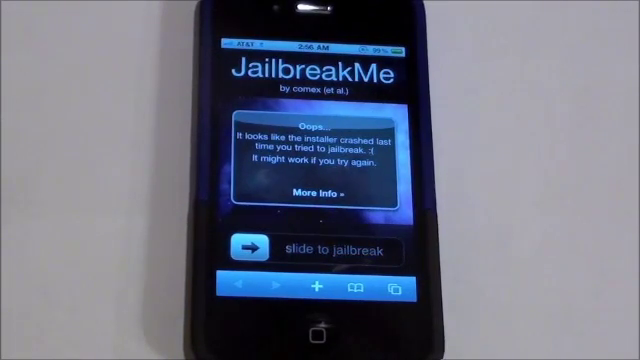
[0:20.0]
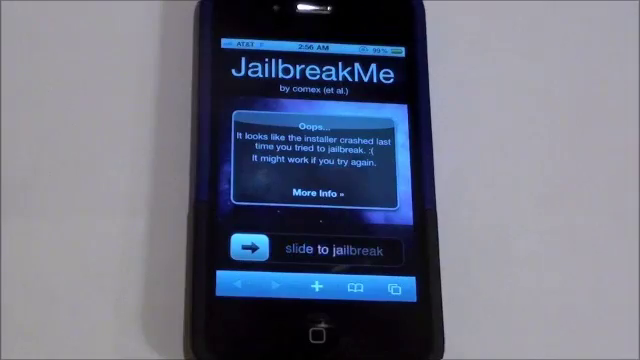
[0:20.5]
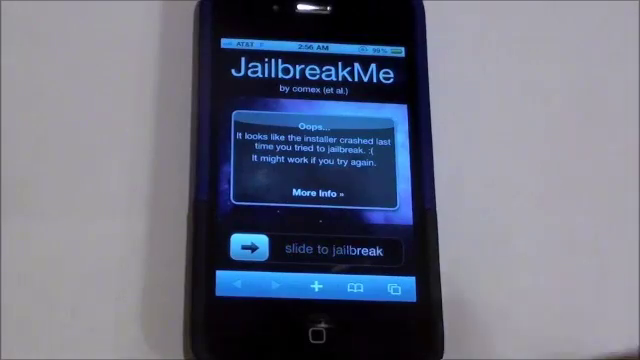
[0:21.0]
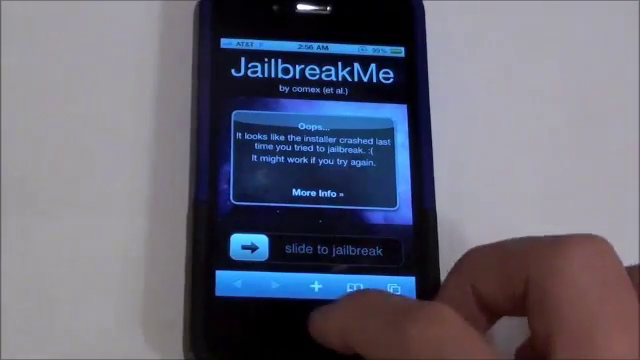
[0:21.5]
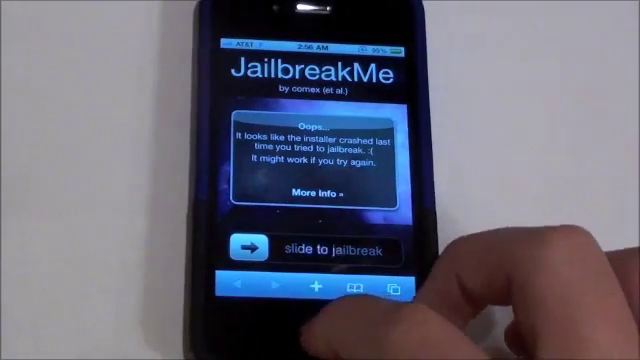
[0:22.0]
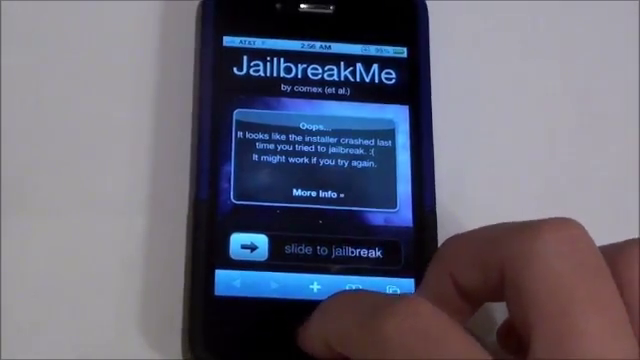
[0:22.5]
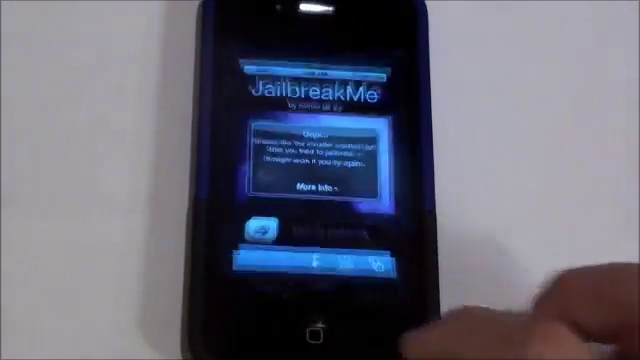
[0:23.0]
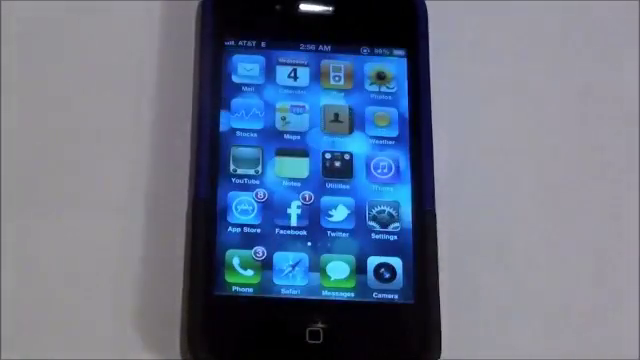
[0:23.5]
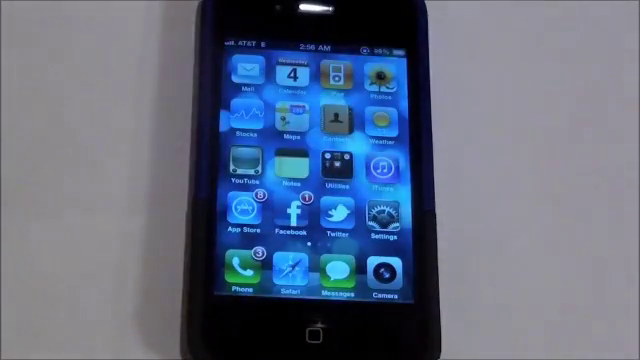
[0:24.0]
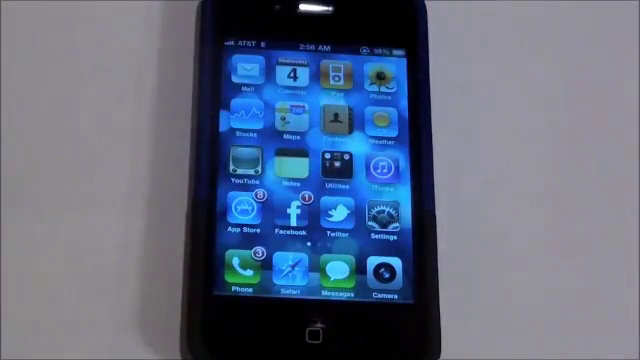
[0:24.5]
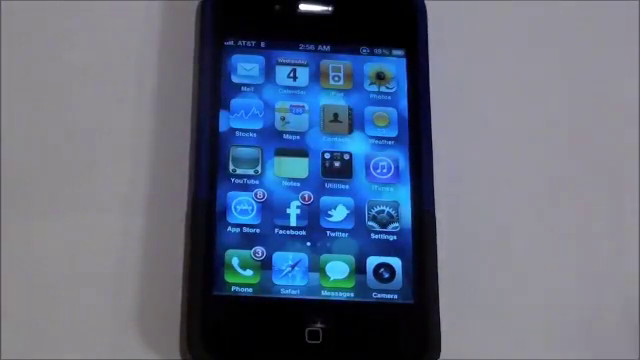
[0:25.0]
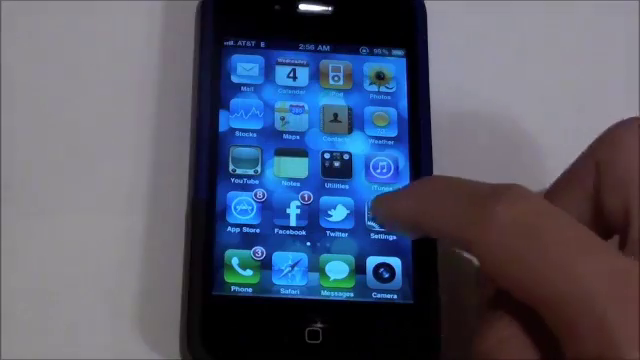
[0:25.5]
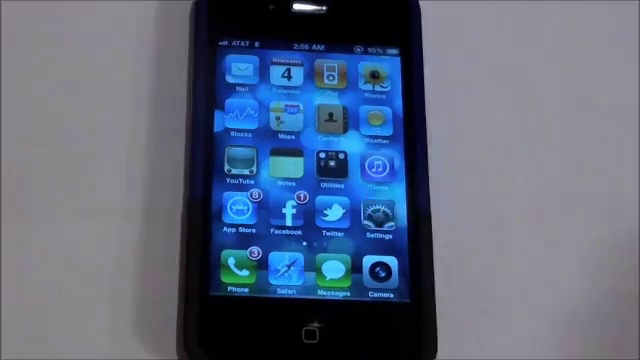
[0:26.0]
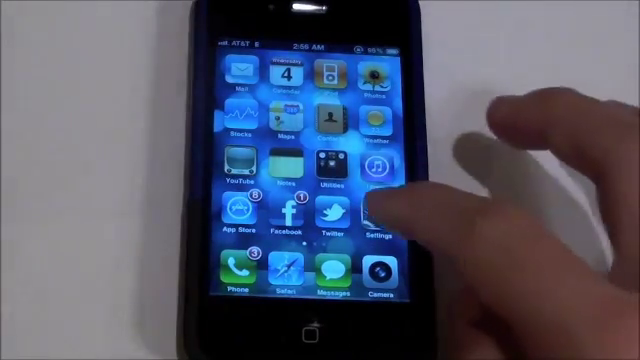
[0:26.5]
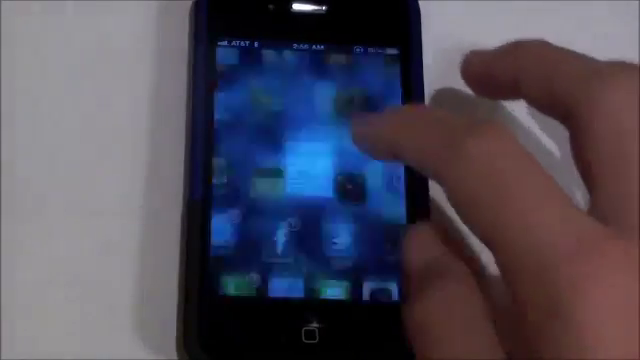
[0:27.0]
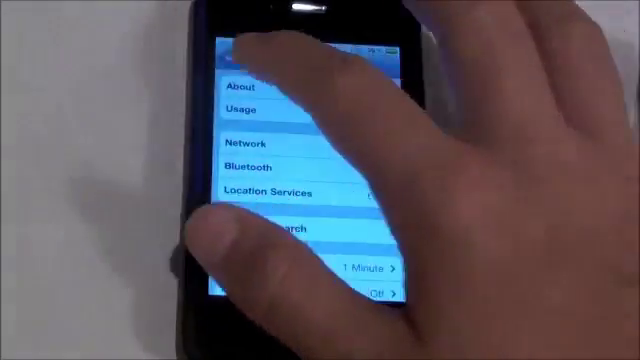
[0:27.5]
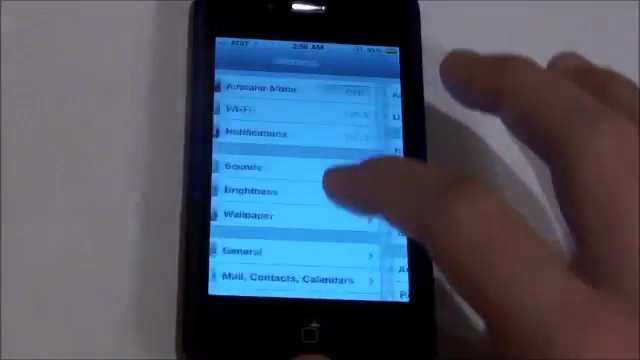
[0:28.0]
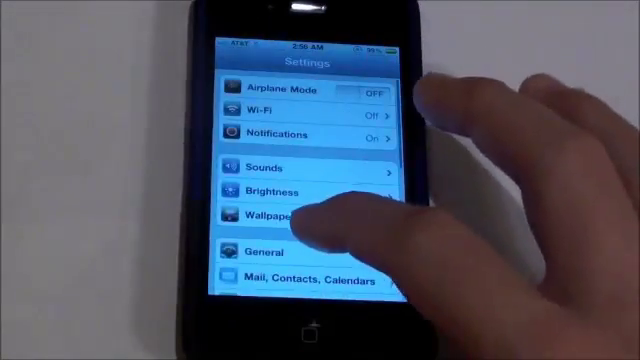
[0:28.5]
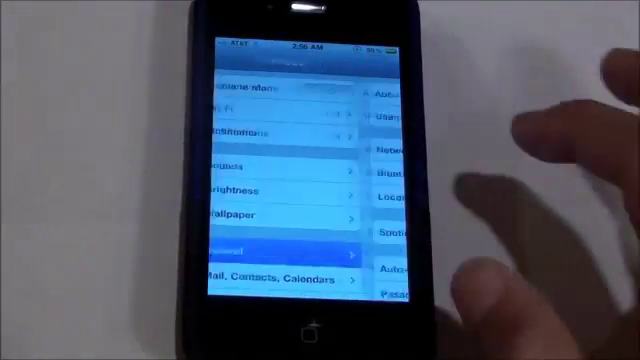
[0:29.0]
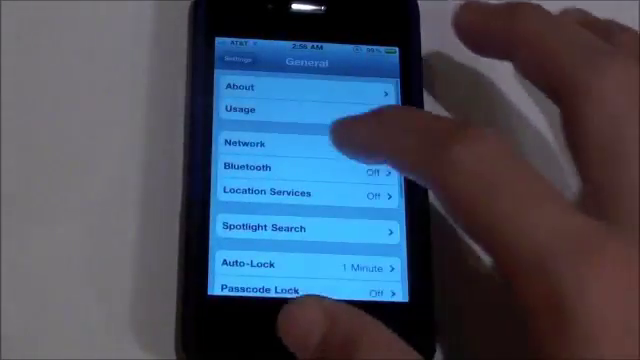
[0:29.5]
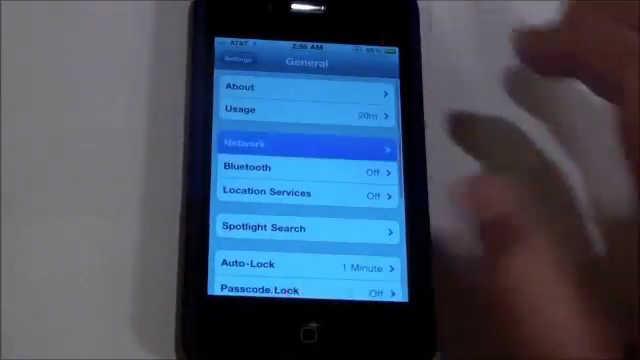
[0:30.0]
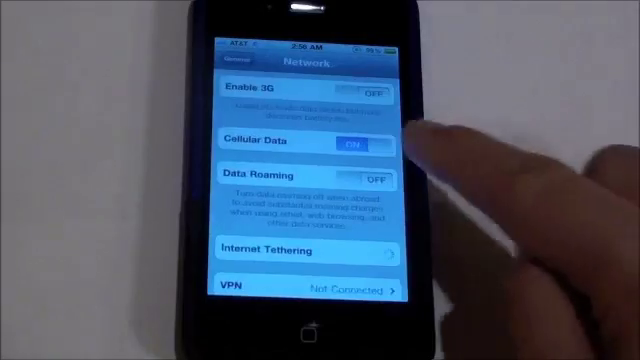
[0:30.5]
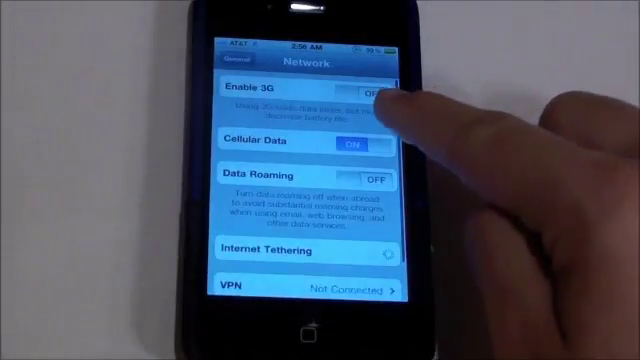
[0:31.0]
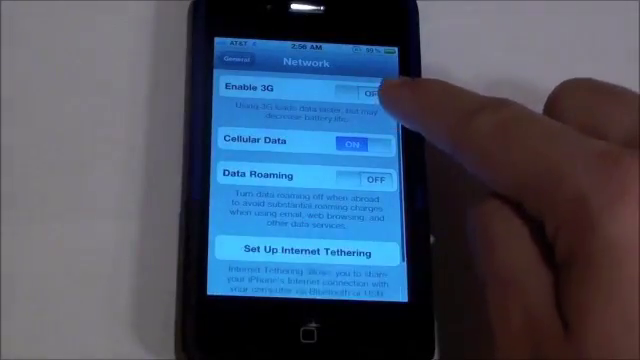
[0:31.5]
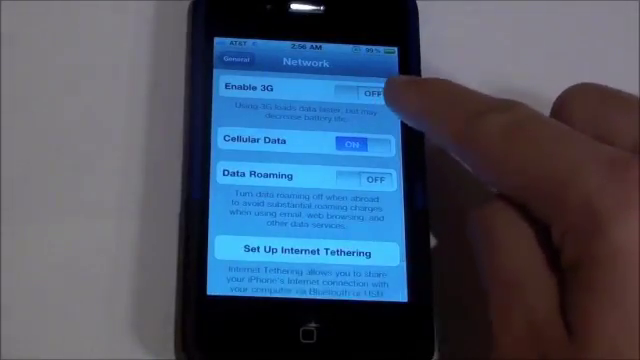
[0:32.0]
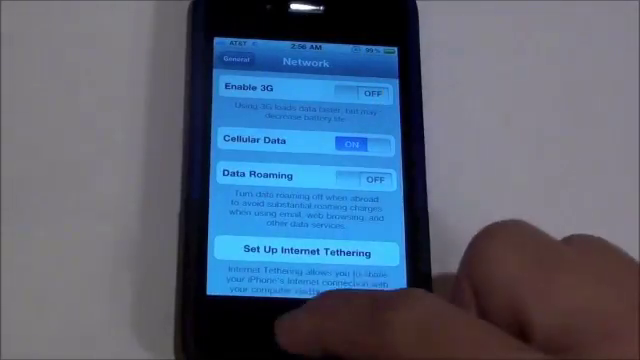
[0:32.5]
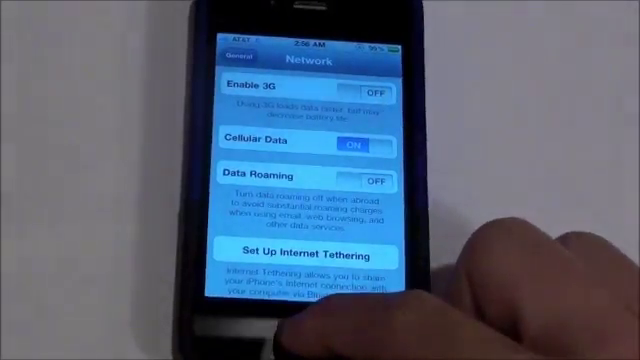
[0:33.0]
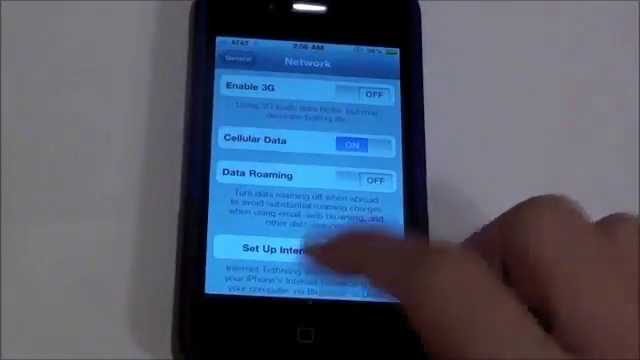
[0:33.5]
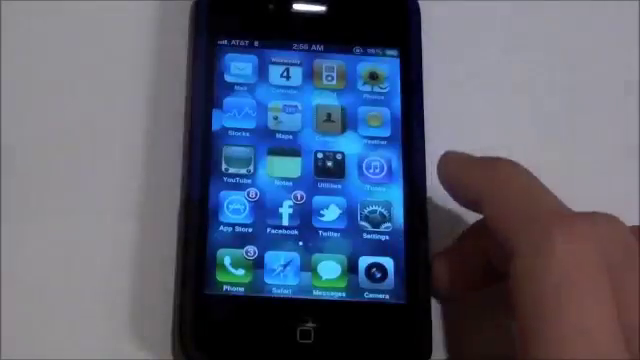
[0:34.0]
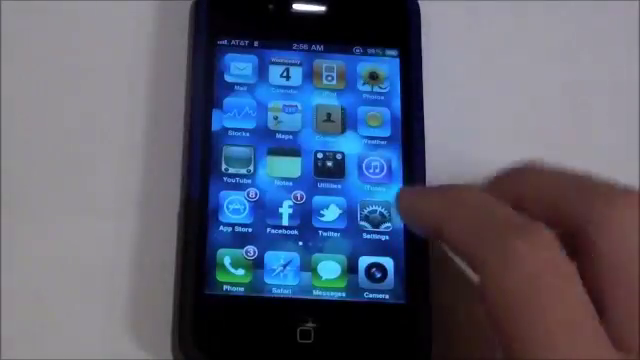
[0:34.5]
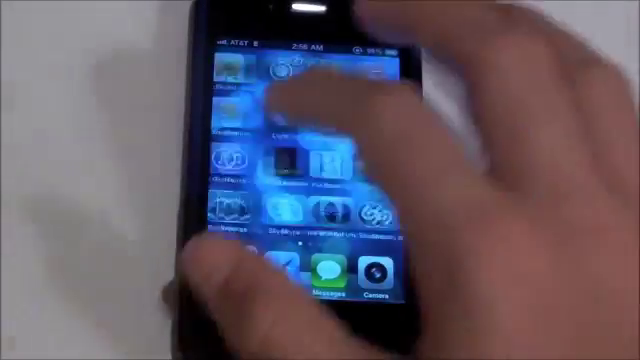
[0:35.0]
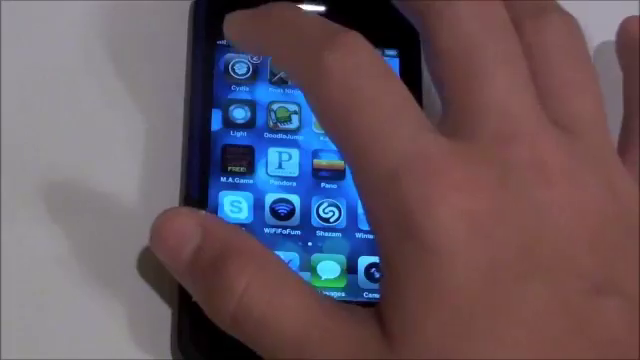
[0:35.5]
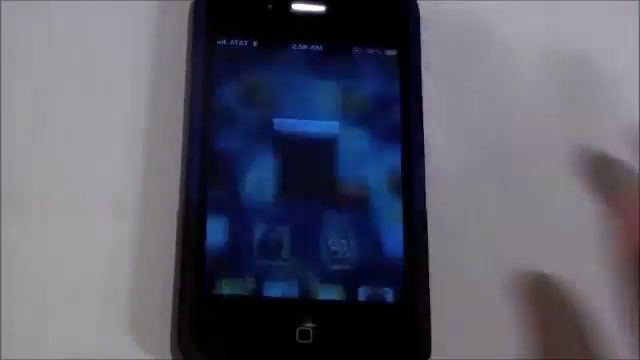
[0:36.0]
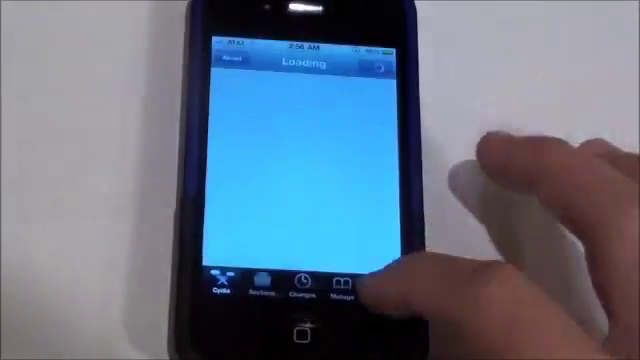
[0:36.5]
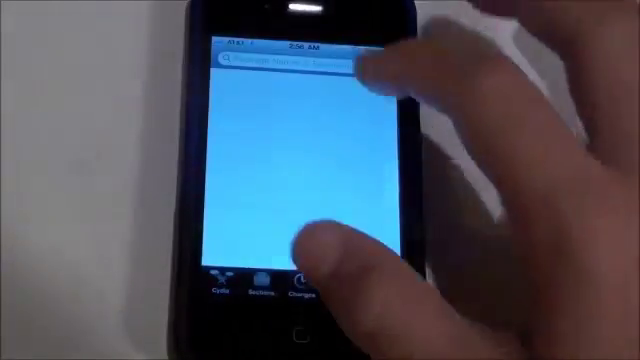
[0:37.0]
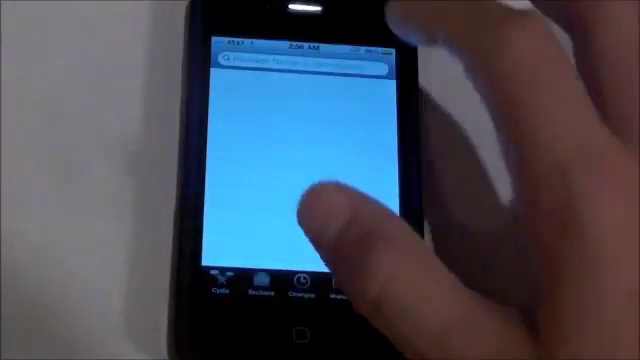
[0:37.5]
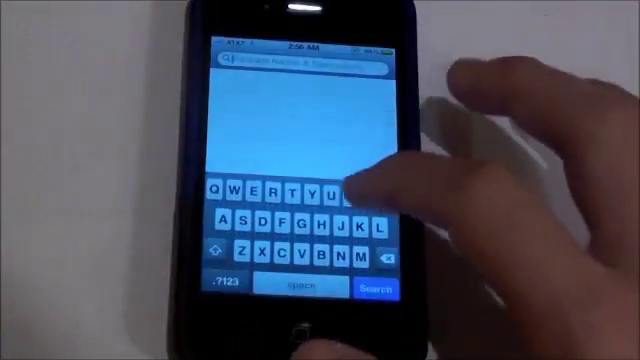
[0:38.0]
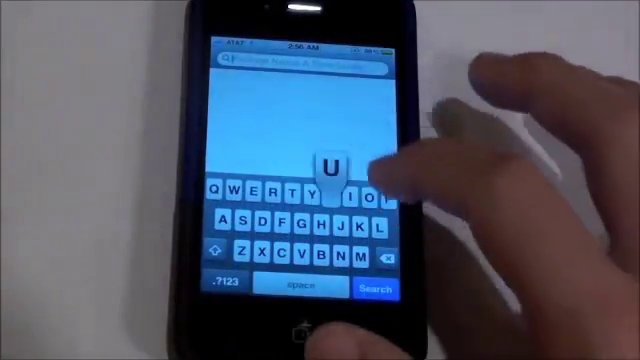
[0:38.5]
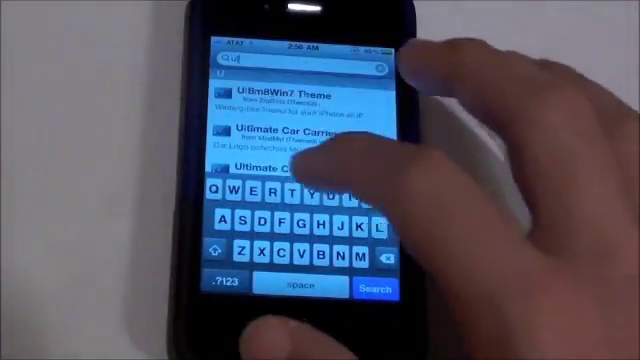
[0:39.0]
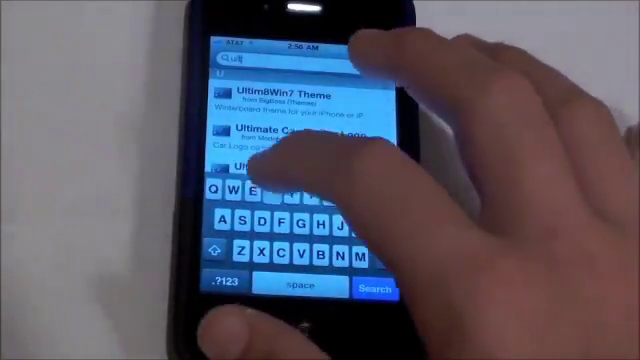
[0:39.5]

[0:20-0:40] The background is light to dark gray, with the shadows darker, and the cell phone remains centered. "Jailbreak me" reads across the top of the phone's screen, and an oops window is open reading "it looks like the installer crashed last time you tried to jailbreak. It might work if you try again." and "More info". Below that is a slide icon with "slide to jailbreak" written next to it, which lights up and goes dark intermittently. The finger reaches in and pushes the home button, returning the phone to the home screen of icons, then touches settings; as settings opens, the entire right hand appears on screen. The forefinger touches about, the settings screen opens, and the finger touches general and then network. The network screen appears with "enable 3G", and the finger turns off the network. It goes back to the home screen, slides, and touches an illegible icon. That app opens with "loading" at the top, and the person types into the search bar, starting with "u".